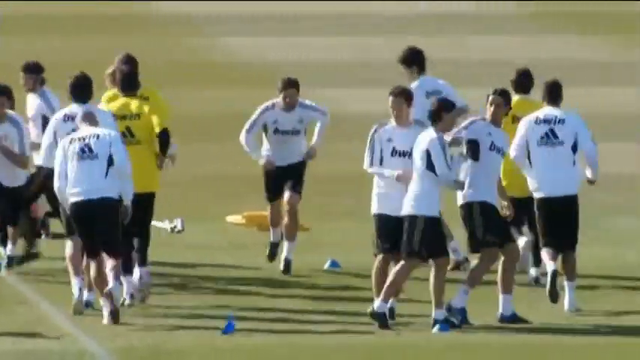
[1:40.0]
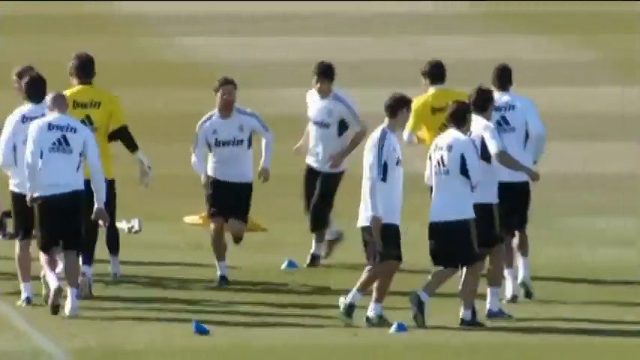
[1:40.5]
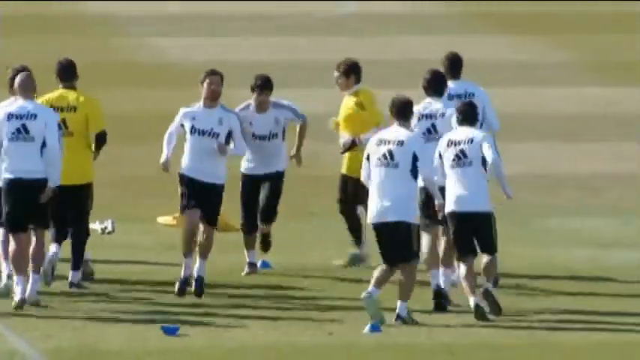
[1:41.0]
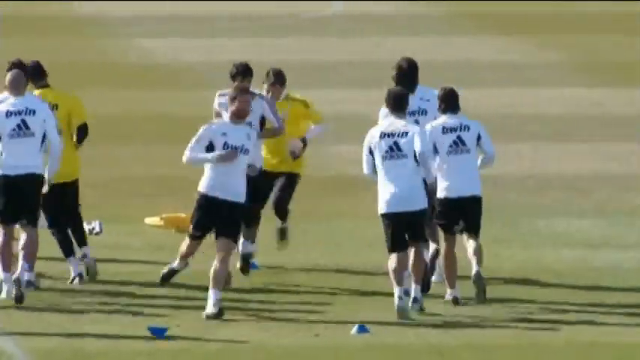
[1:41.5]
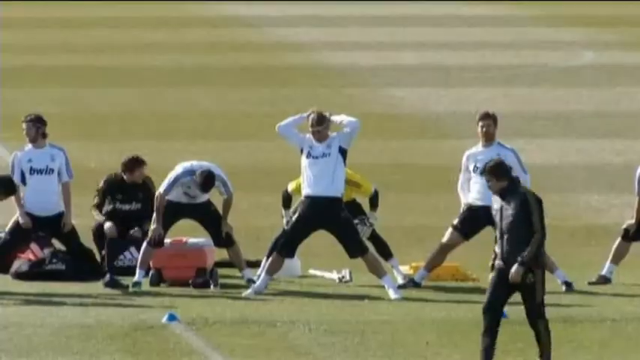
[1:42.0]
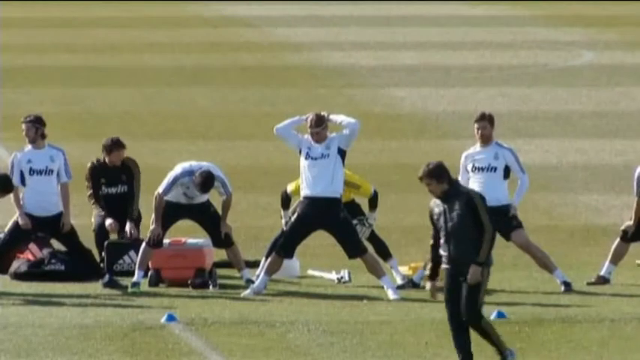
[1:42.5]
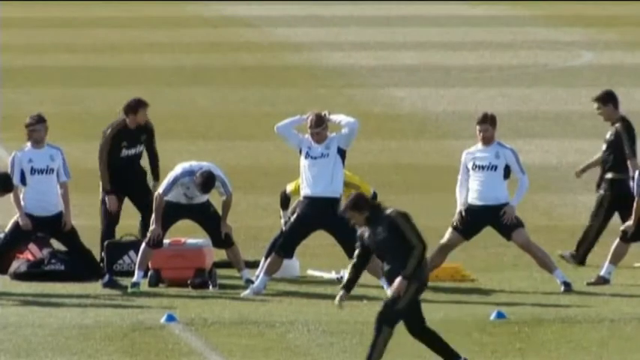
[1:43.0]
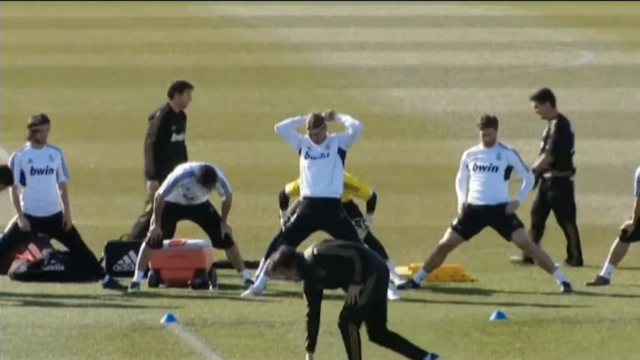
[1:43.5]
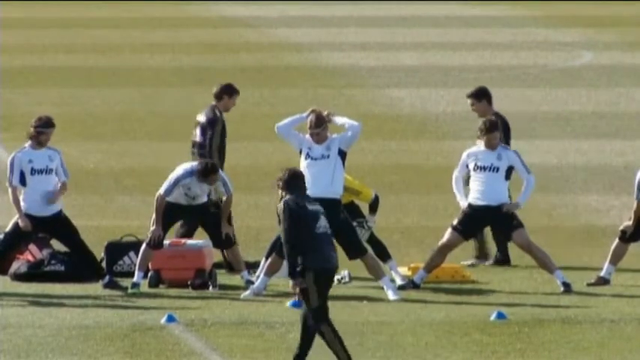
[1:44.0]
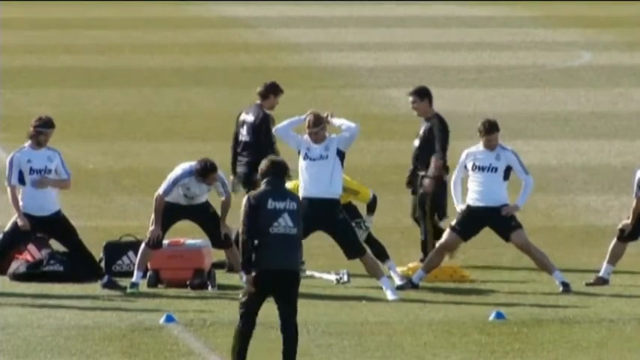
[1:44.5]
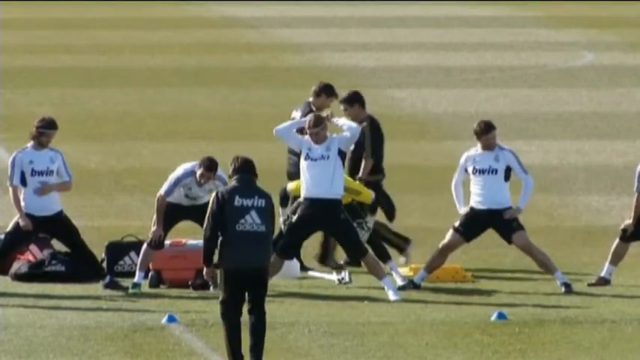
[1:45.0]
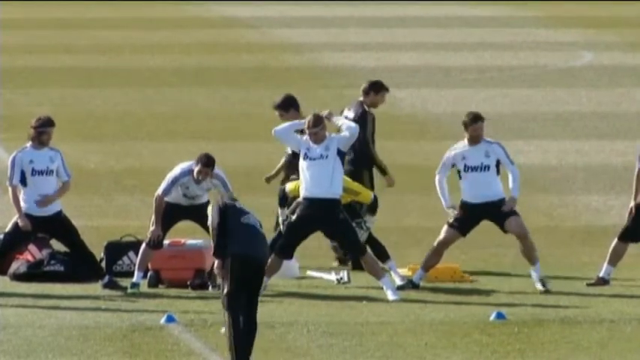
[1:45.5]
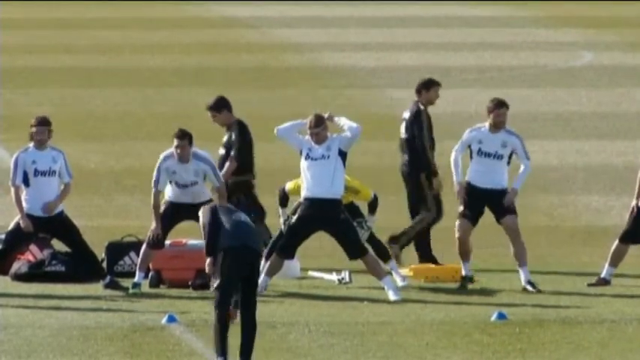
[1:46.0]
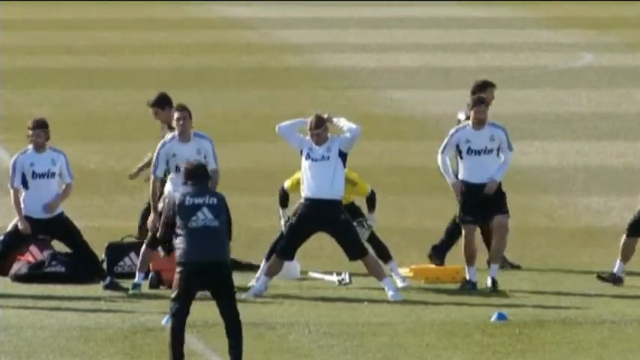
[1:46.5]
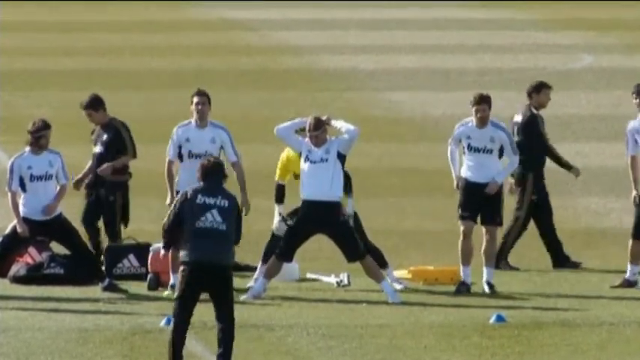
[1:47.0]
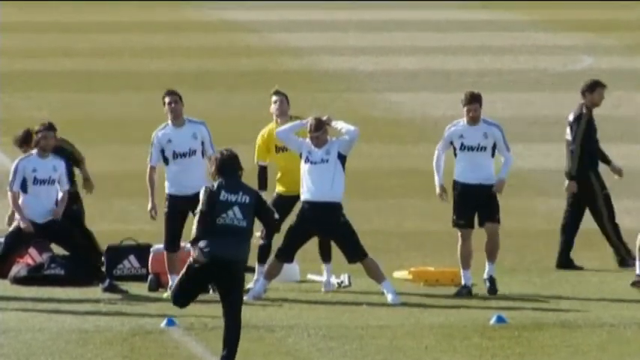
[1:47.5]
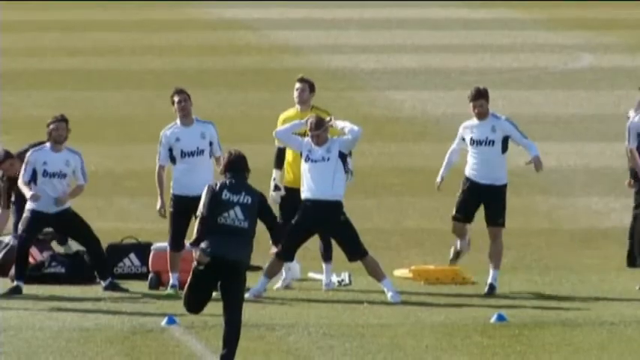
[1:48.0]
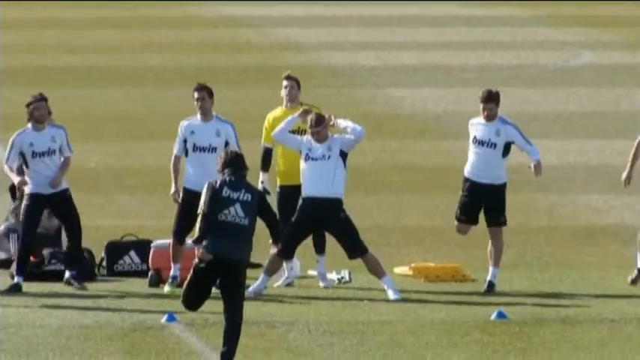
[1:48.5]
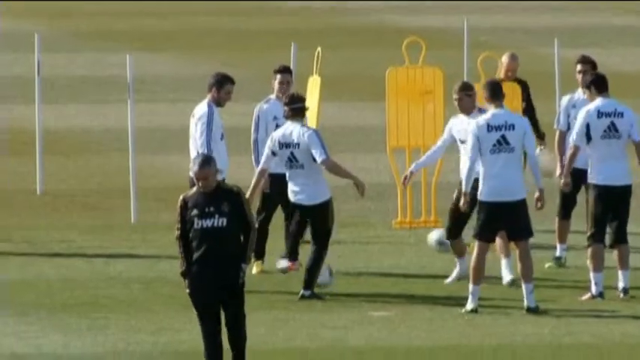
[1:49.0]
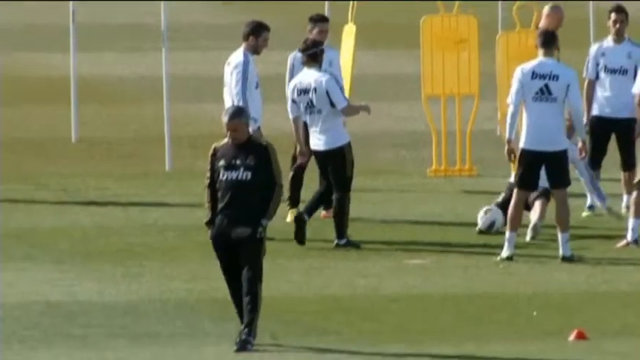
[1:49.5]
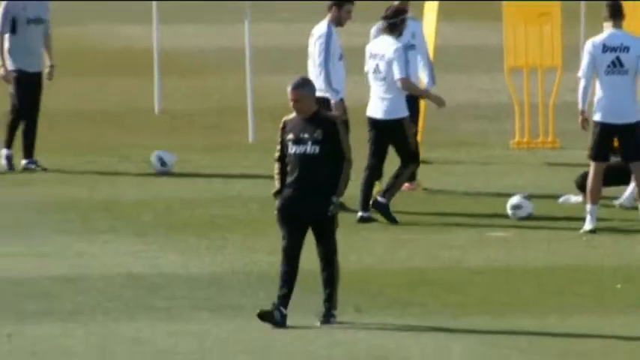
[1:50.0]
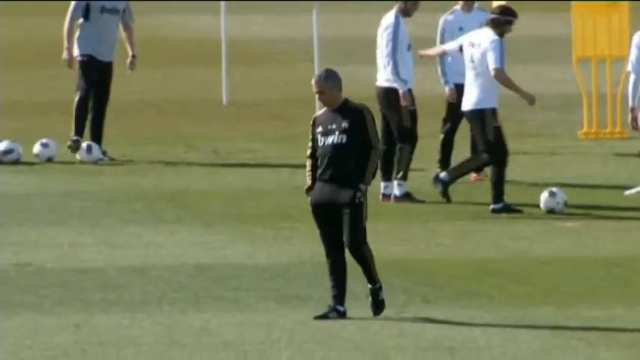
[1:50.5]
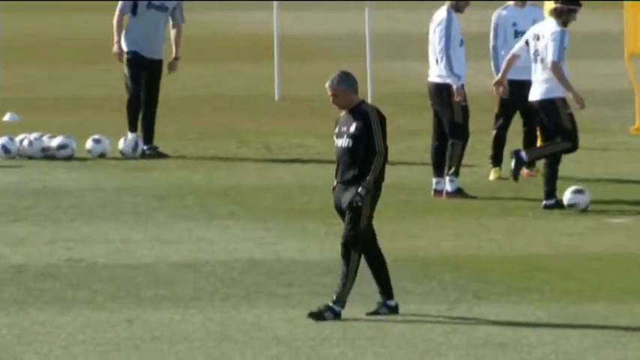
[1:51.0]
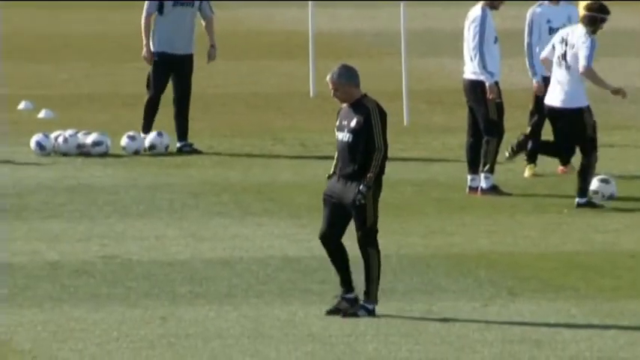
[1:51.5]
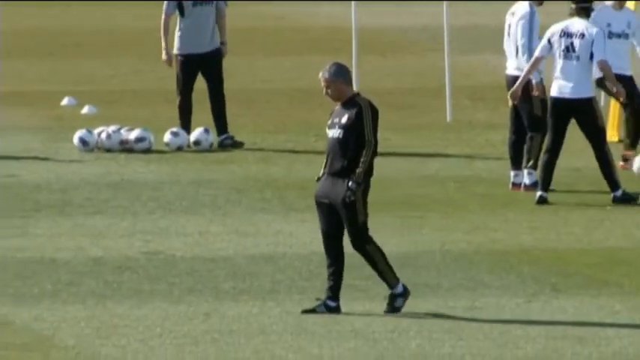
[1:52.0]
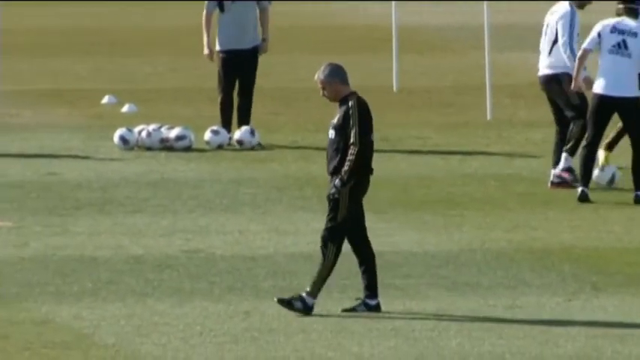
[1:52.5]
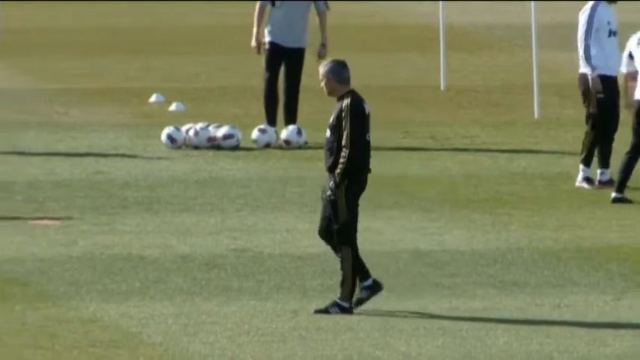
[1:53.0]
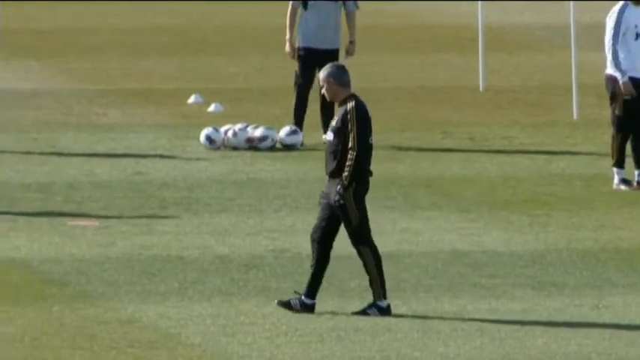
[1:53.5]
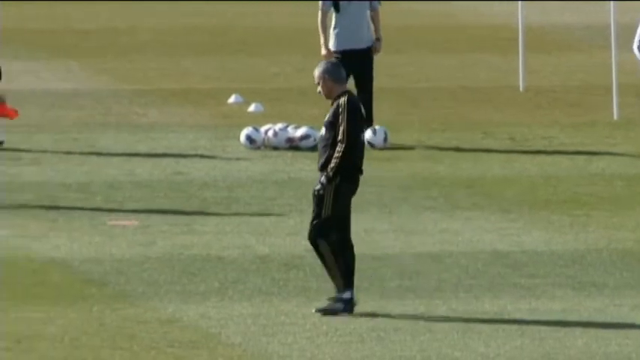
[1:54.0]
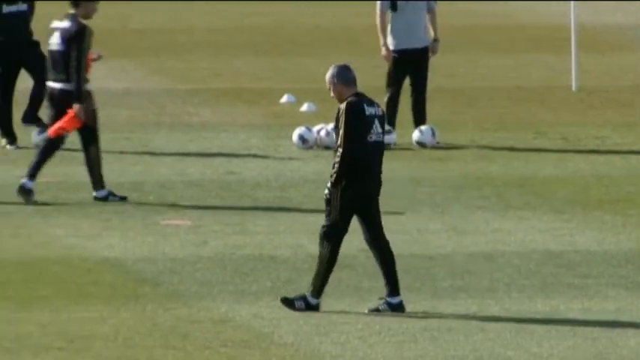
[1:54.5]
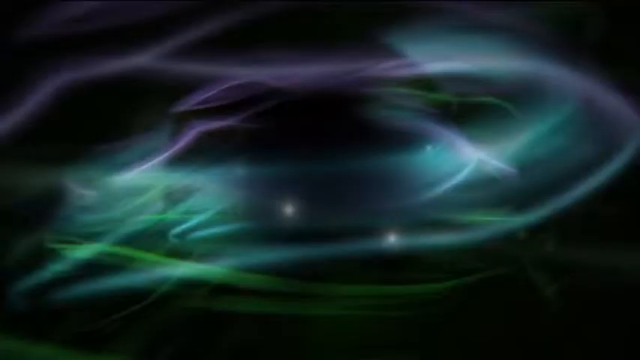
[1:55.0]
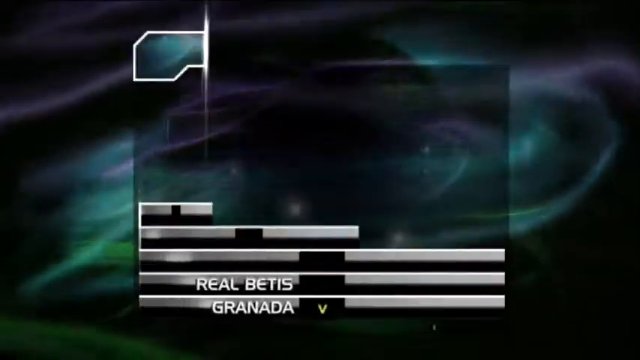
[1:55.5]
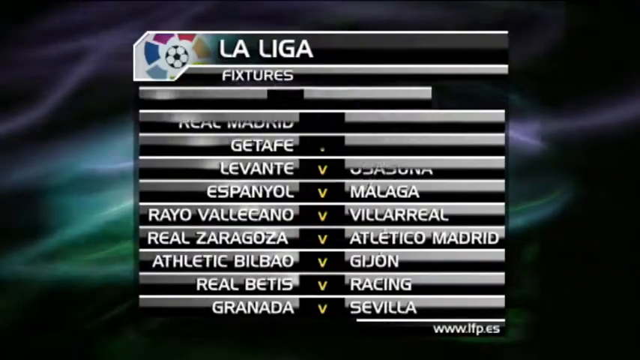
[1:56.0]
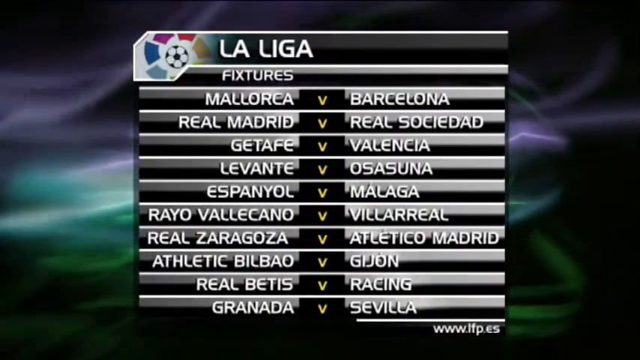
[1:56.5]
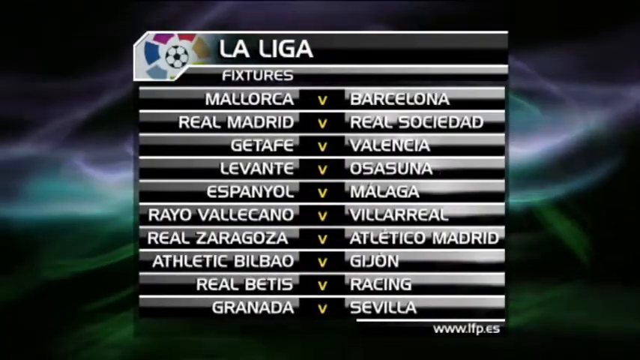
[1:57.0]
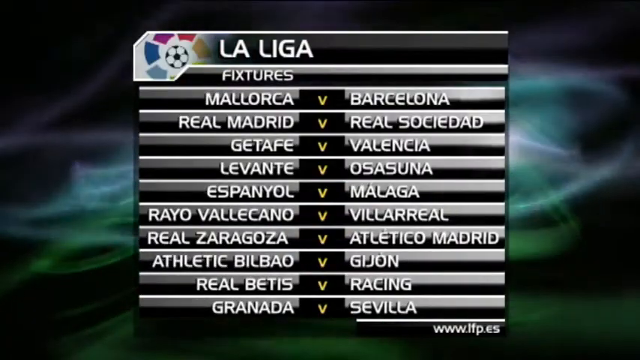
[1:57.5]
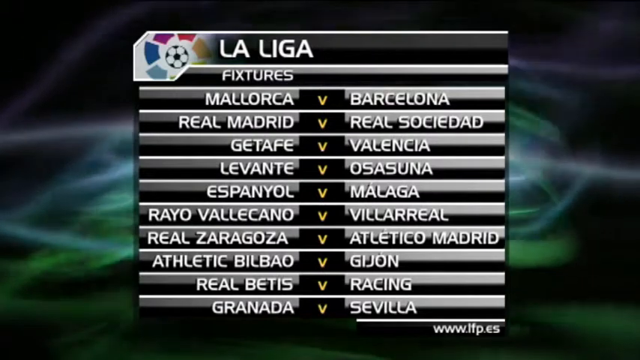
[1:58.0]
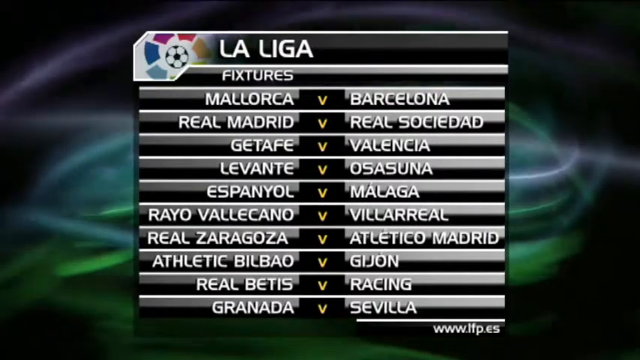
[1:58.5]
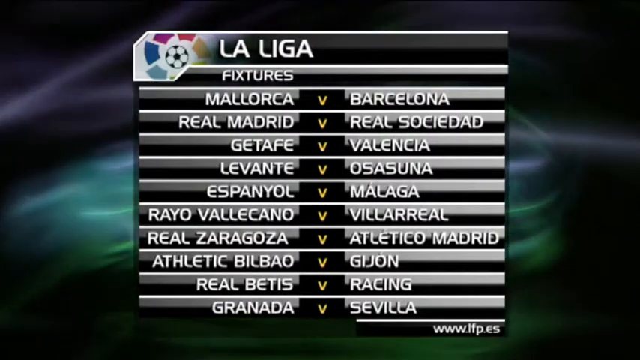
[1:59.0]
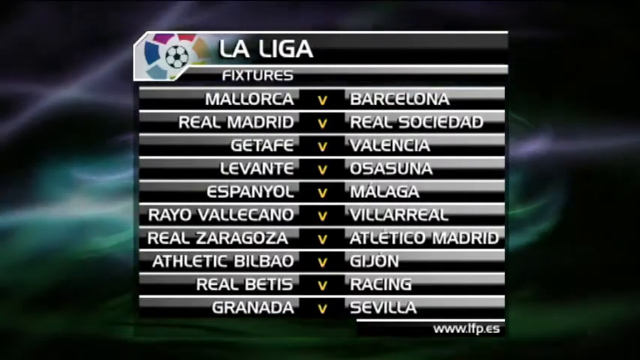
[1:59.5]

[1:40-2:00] The video cuts to another practice session with players mostly in white jerseys bearing a BWIN logo across the front. On some players, BWIN appears at the top of the back of the jersey with the Adidas logo below it. A couple of players wear yellow versions of the same jersey. They do a simple running exercise around some pylons, and one player kicks one of the small blue pylons, sending it off to the right. A number of players do a stretching exercise with their legs spread out while coaches in black tracksuits with the same BWIN logo look on. A number of soccer balls are out for use. The video then cuts to a full-screen graphic showing La Liga fixtures, presumably upcoming.